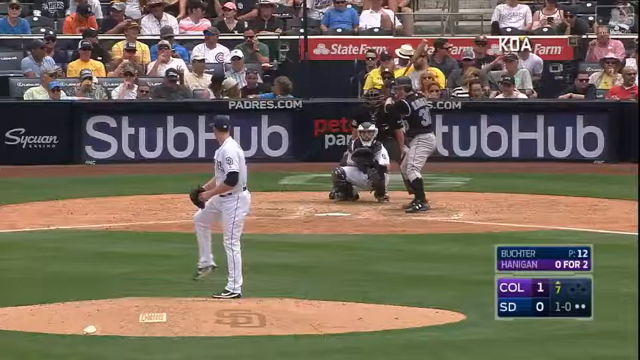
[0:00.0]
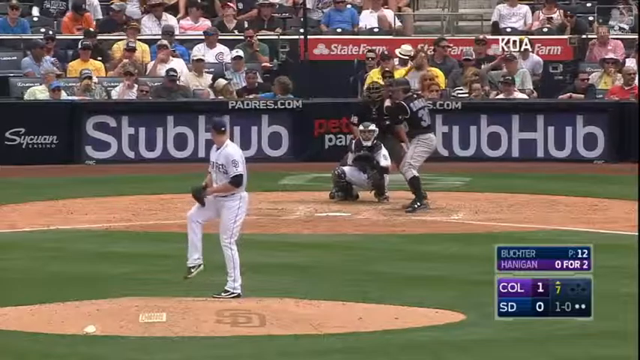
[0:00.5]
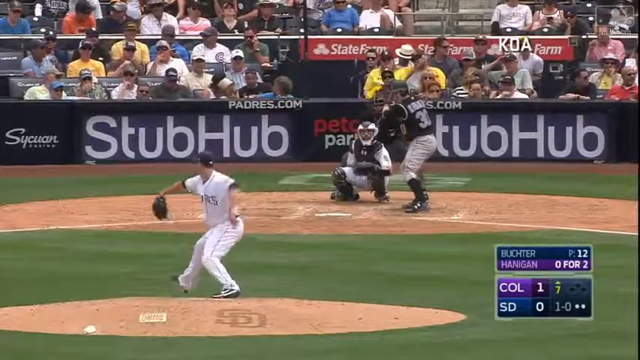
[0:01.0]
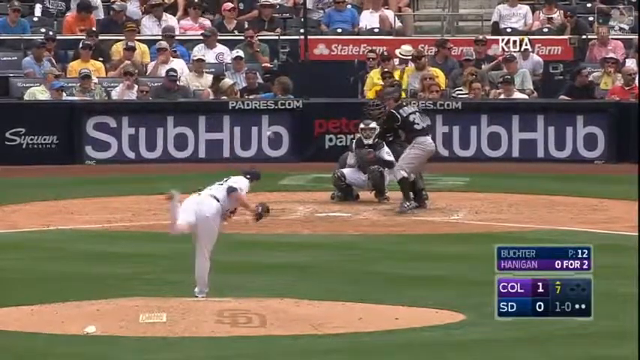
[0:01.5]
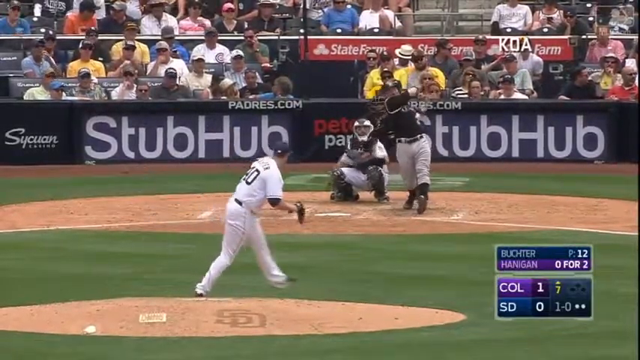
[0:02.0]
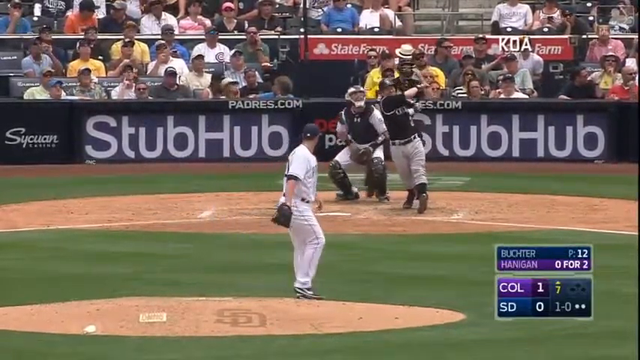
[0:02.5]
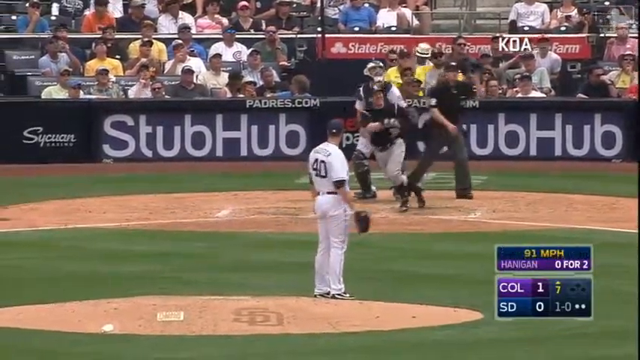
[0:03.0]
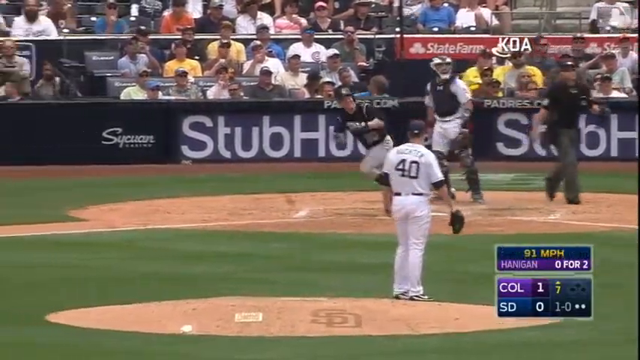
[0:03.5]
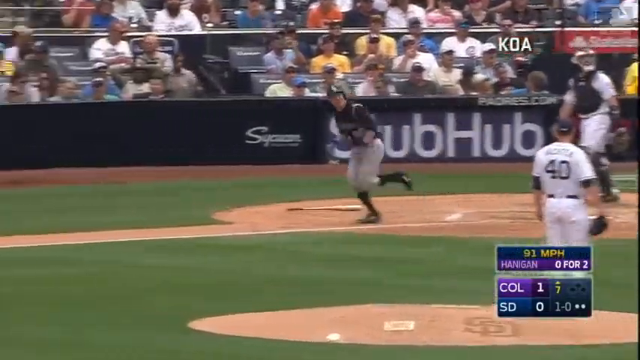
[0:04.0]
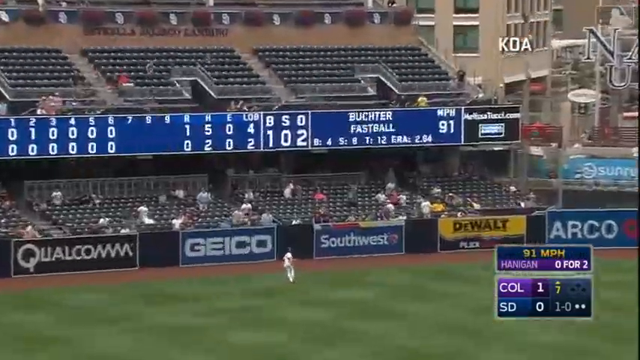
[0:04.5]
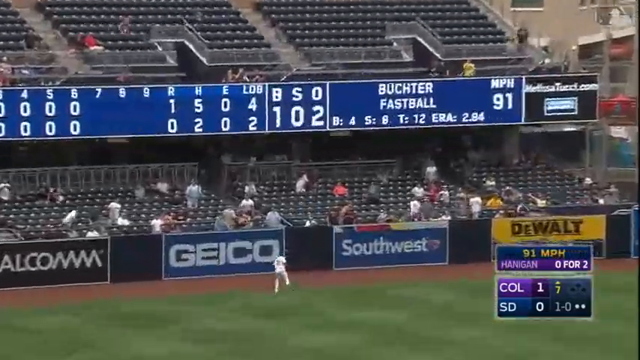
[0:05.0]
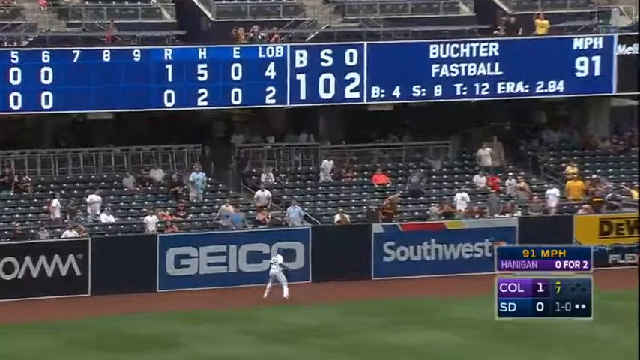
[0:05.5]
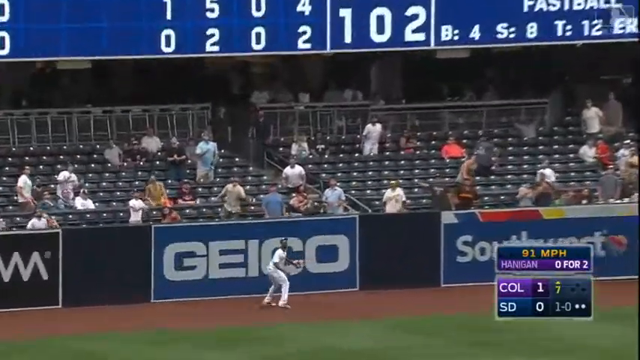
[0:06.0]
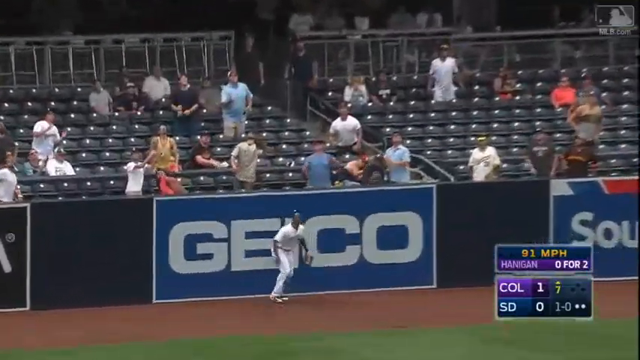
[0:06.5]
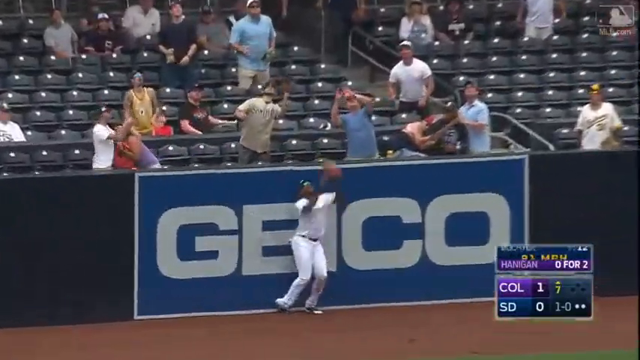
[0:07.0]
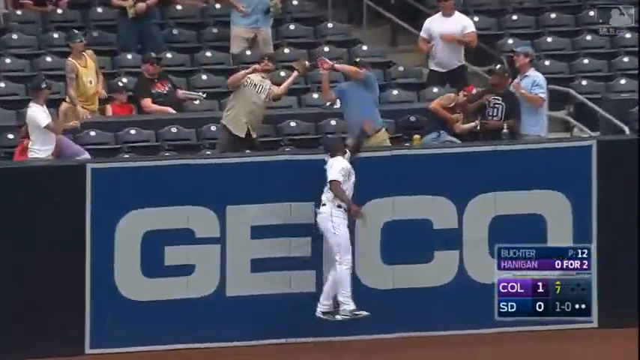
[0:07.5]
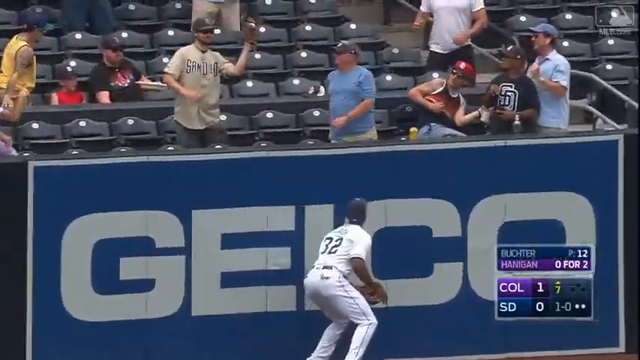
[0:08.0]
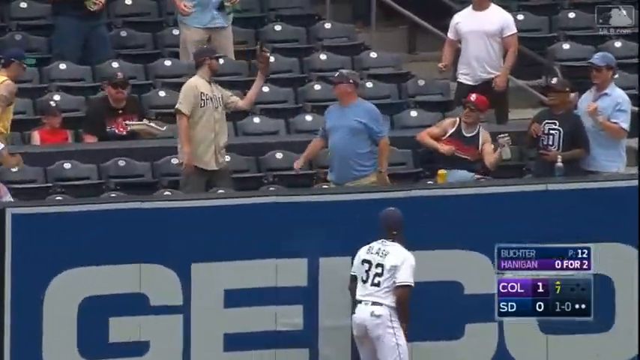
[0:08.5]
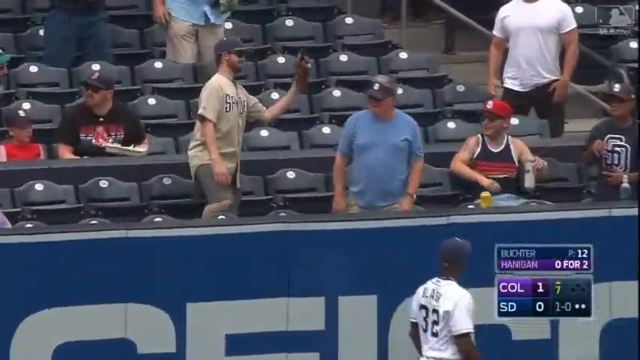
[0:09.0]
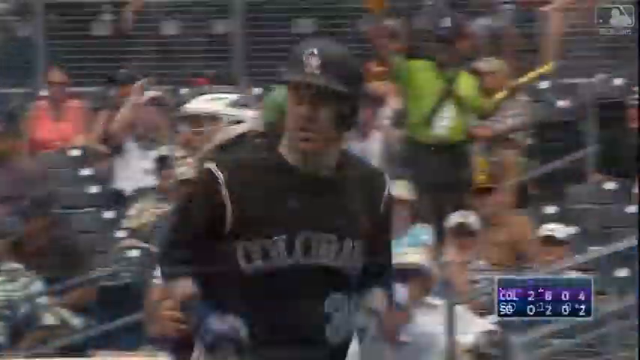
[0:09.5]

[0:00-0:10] The game appears to be Colorado against SD, possibly San Diego, with the score Colorado 1, San Diego 0. It is the top of the seventh with a count of one ball and zero strikes and two outs. The pitcher throws, and the batter hits the ball. Either the center fielder or the left outfielder goes back and jumps but misses, and a fan catches the ball for a home run.